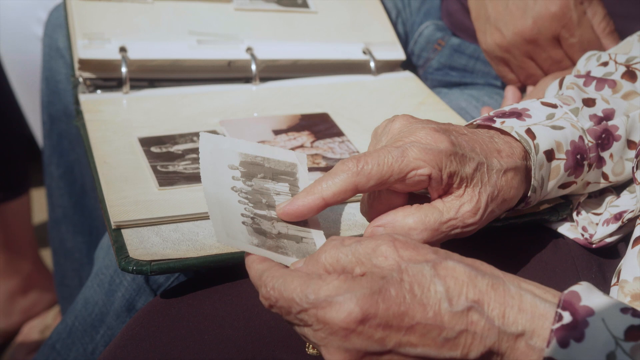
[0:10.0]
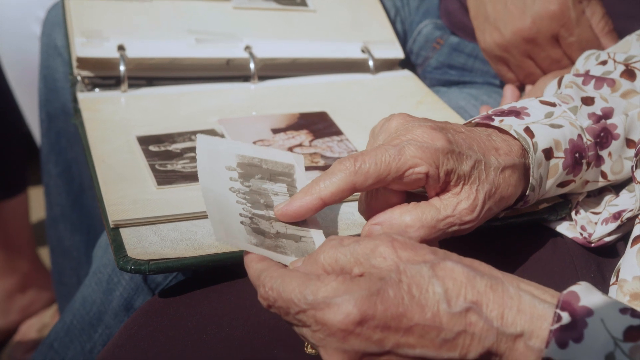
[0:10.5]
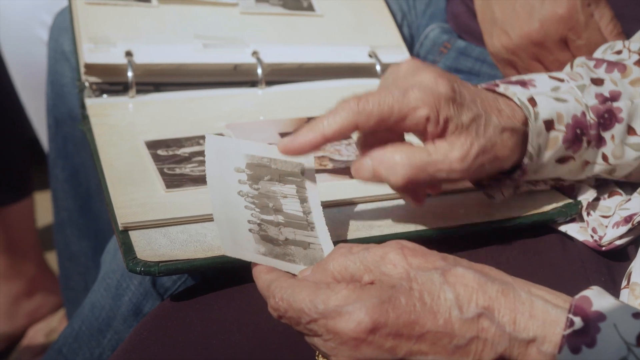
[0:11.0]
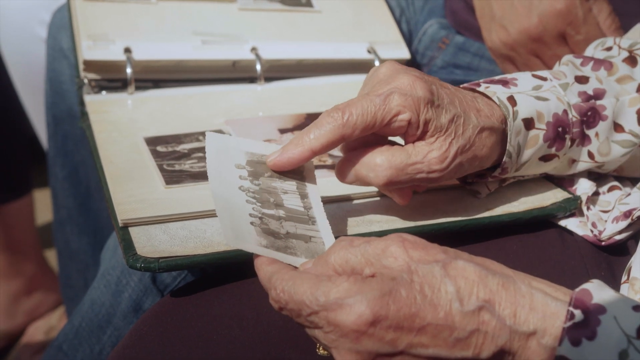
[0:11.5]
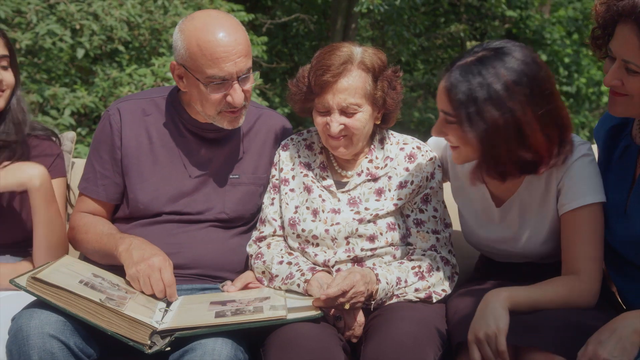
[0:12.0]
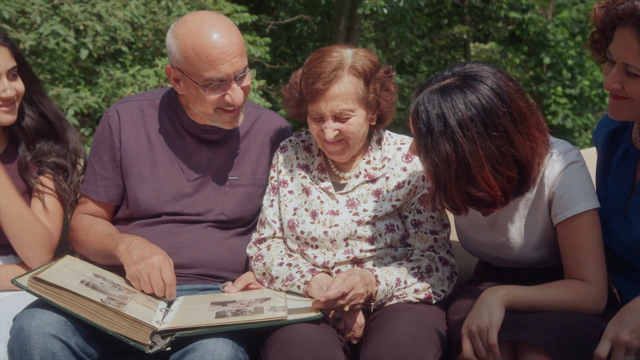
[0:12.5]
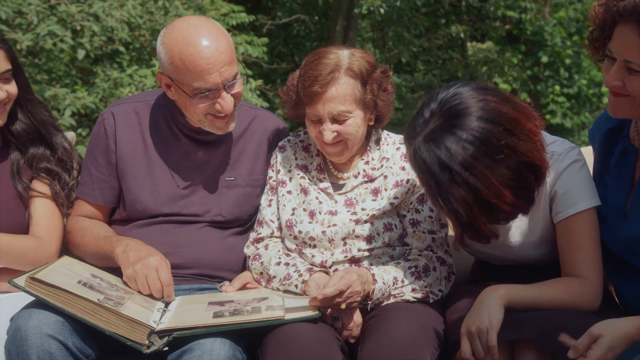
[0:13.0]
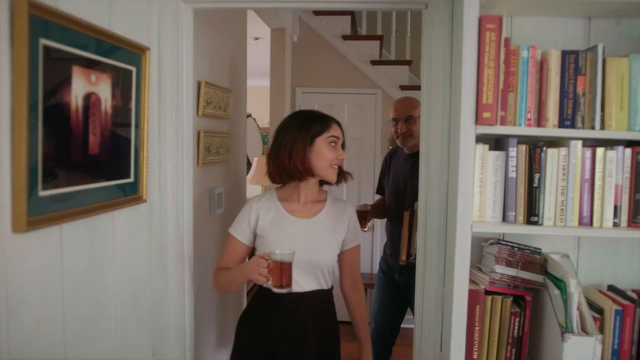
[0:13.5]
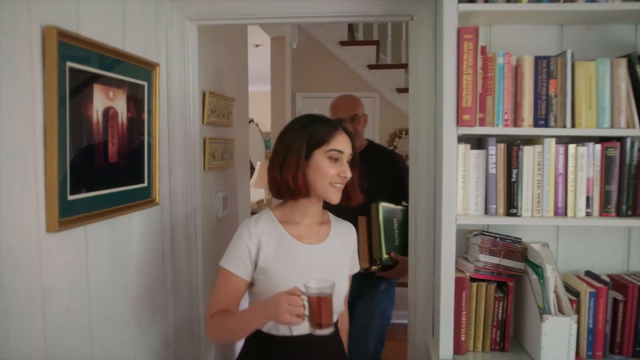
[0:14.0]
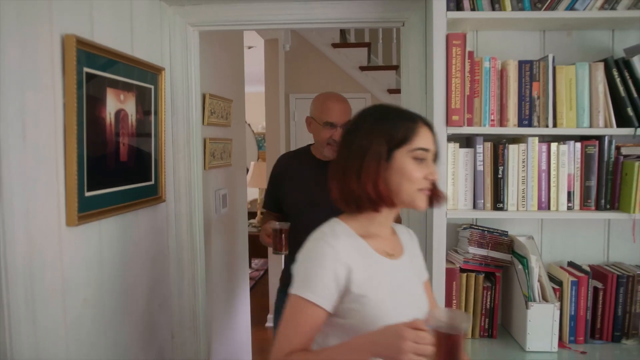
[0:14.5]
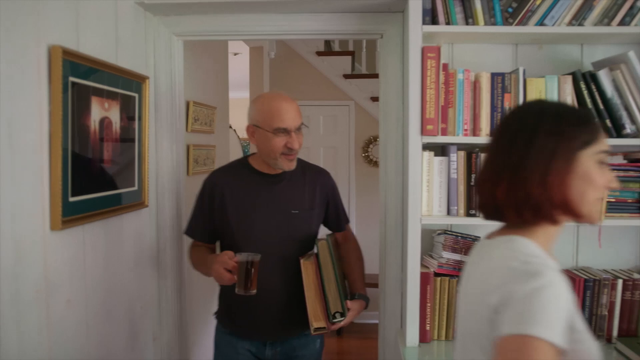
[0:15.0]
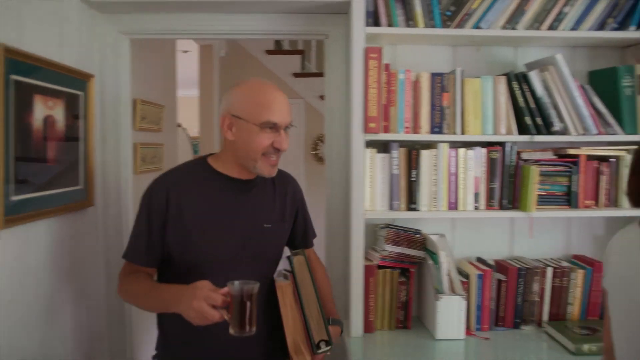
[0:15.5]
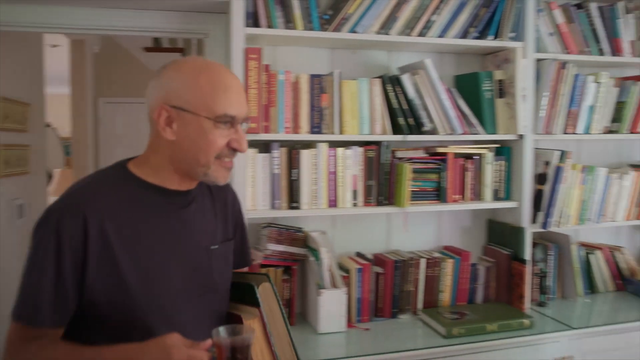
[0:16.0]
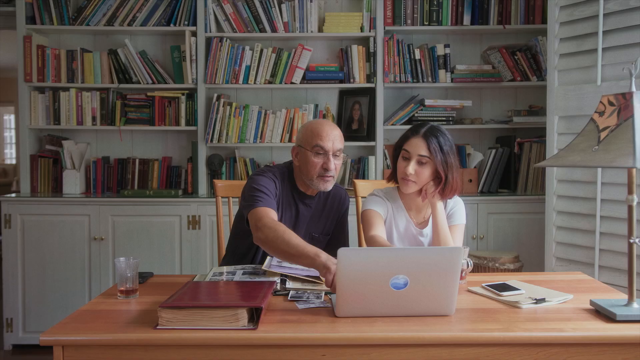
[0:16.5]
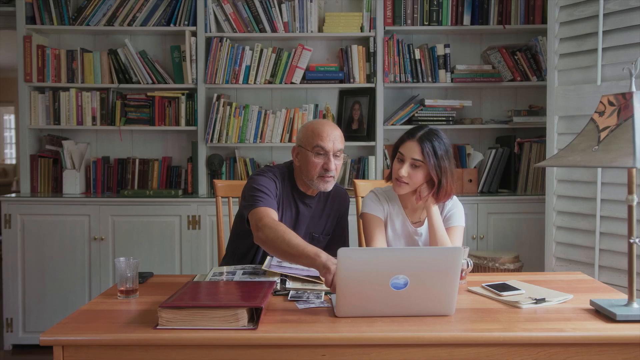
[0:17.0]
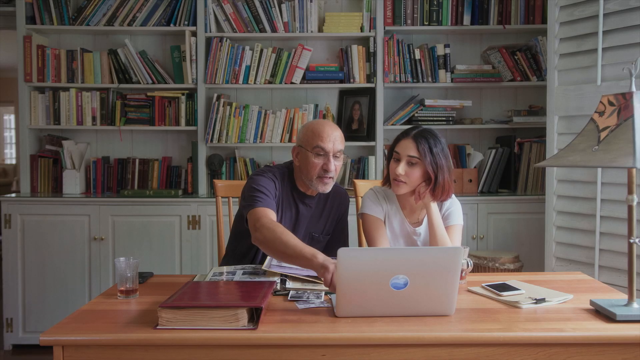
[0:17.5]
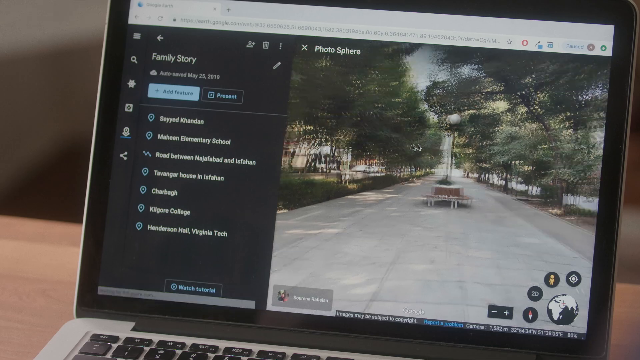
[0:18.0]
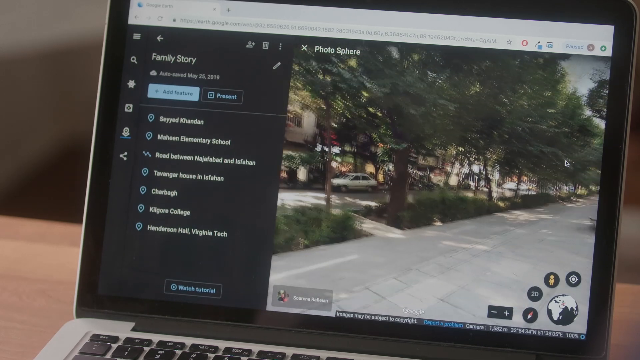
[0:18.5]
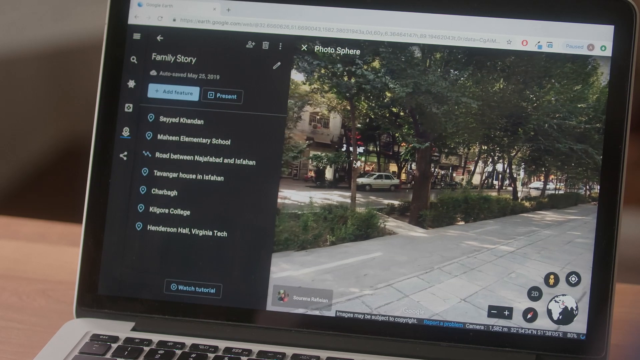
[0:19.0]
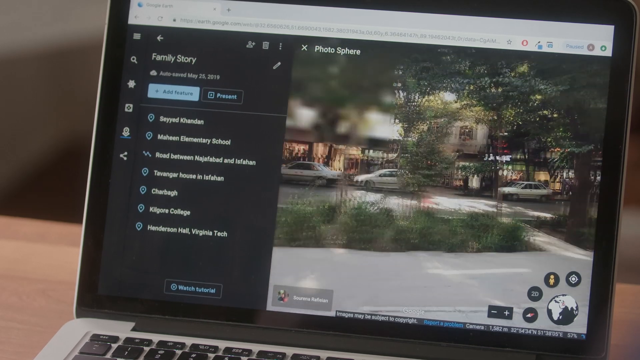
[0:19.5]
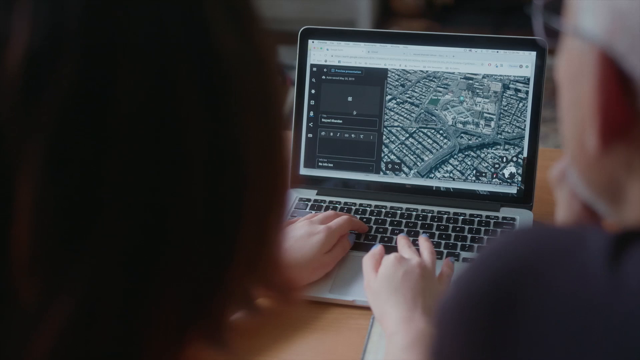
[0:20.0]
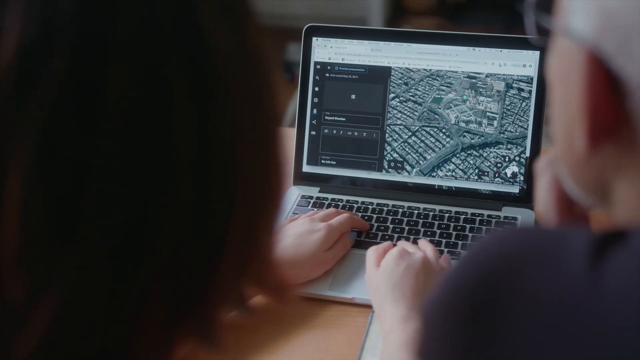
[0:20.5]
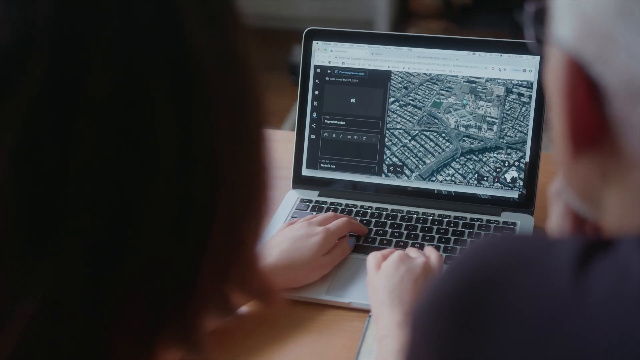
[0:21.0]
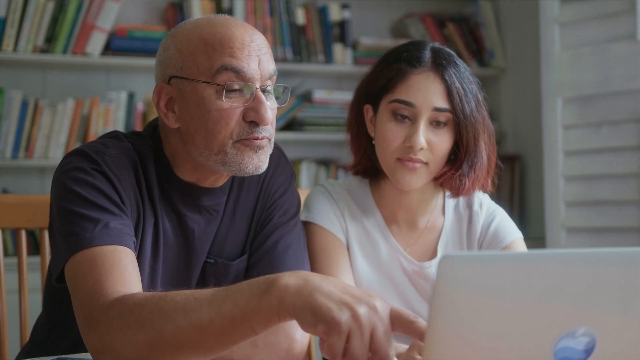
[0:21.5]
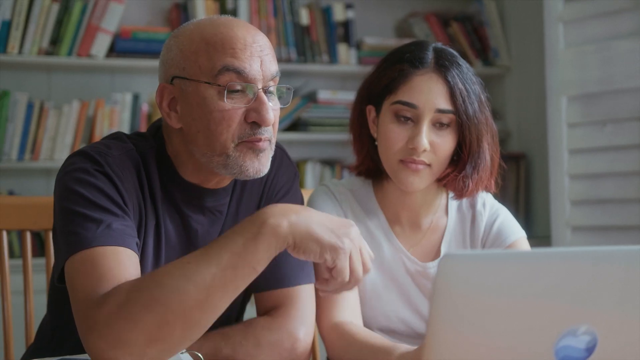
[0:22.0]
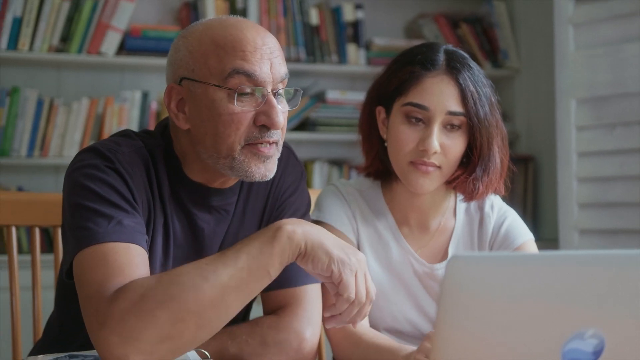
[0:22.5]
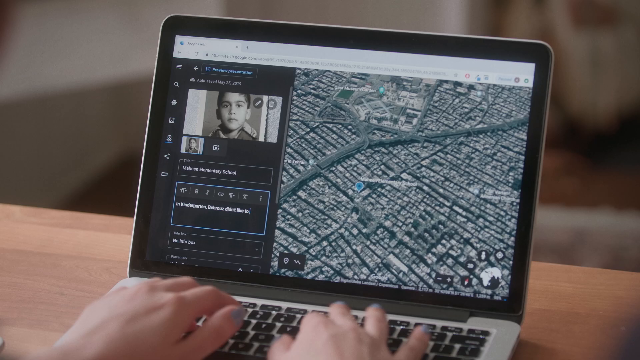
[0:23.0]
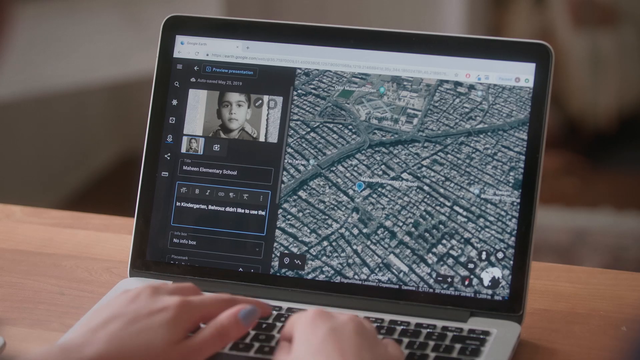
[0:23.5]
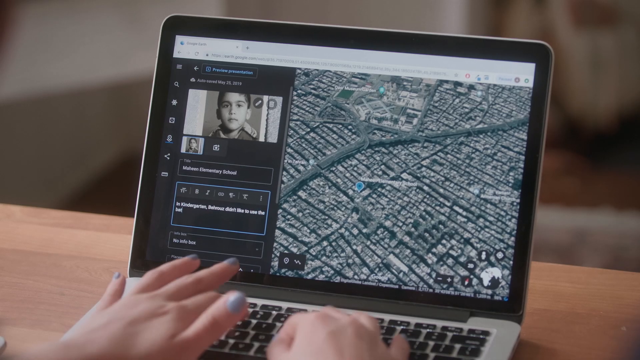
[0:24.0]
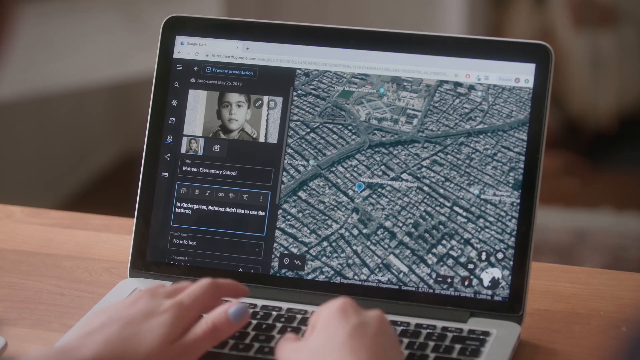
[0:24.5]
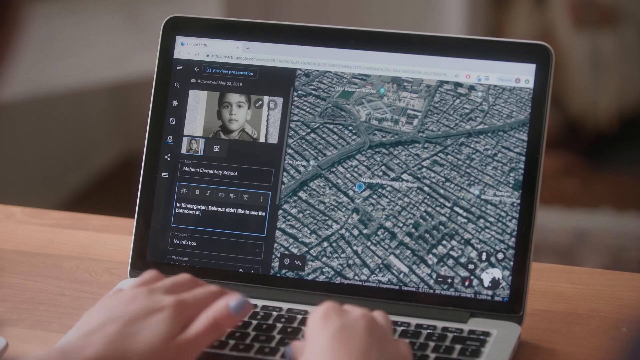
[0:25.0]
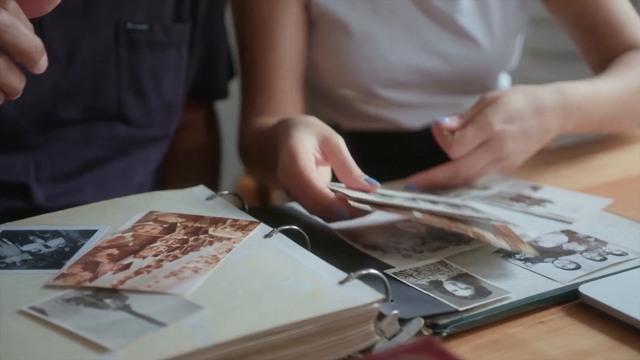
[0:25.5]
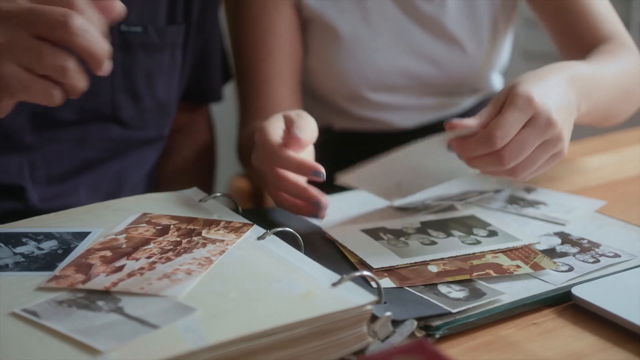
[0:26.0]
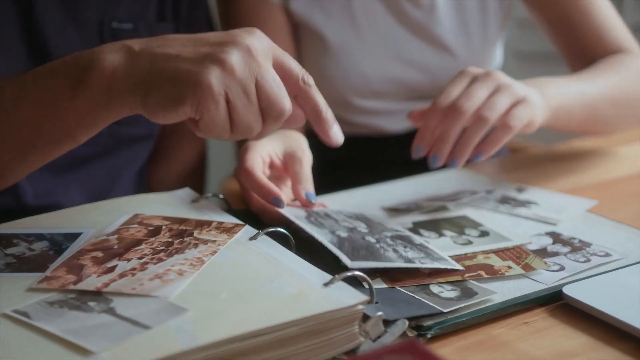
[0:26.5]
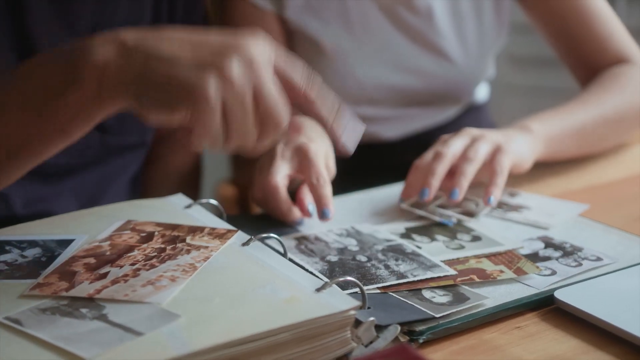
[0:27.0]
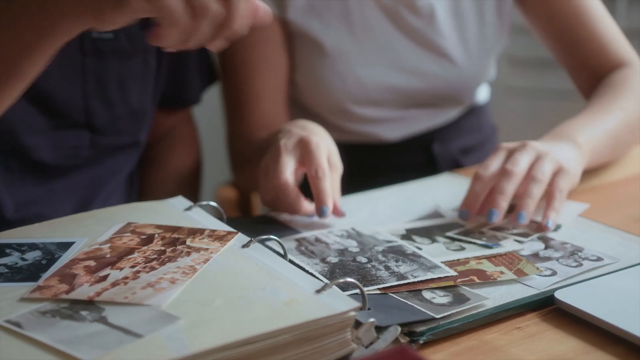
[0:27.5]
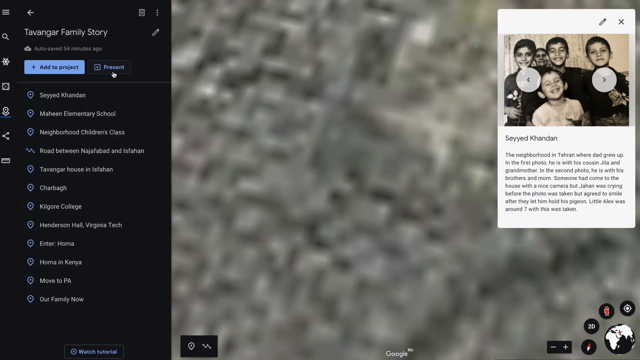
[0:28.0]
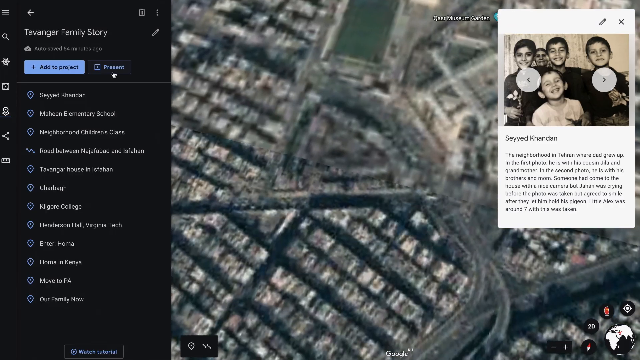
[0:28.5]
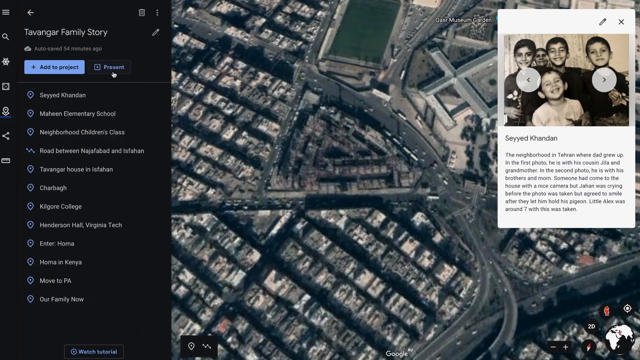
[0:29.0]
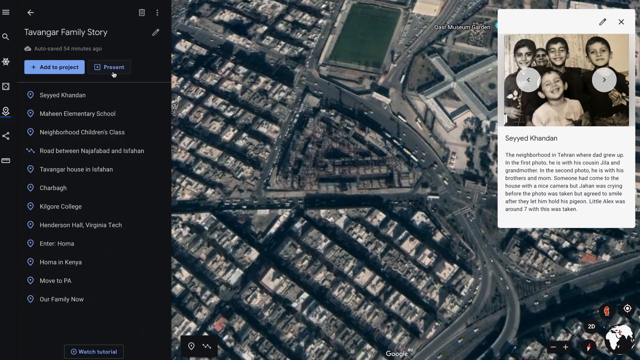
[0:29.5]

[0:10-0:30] Outside, six people sit on a bench. An older woman holds an old photograph above an album and points to the people in it, while an older man on her right, in a black shirt and glasses and maybe in his 60s, speaks to her and laughs; everyone is gathered in, watching what is happening with the photo. In the next scene, the young woman, the writer, in her 20s, walks into a room in the house with the older man; she holds a red mug and he holds a glass of brown liquid. They sit down at a wooden table with a laptop and the album of many old photos, with a large white bookshelf filled with many books behind them. They both point at the screen, where there appears to be a map, and they fill in information. The screen says "family story" and shows a photo of a young boy; they type something into the caption and sort through the pictures.